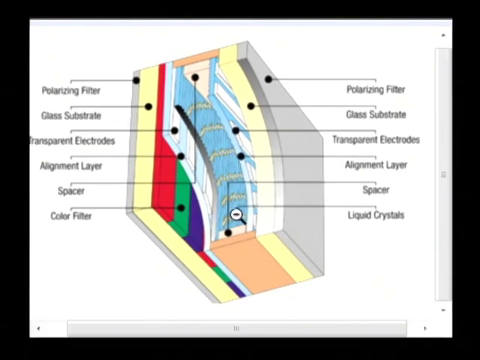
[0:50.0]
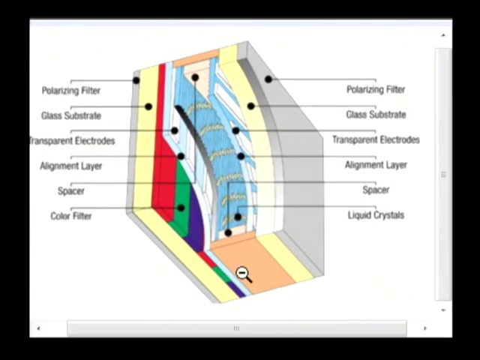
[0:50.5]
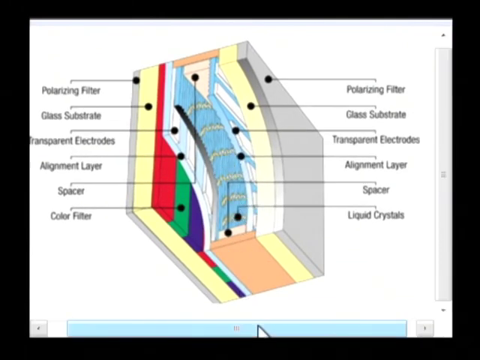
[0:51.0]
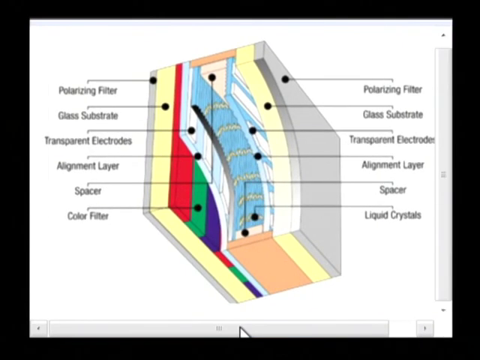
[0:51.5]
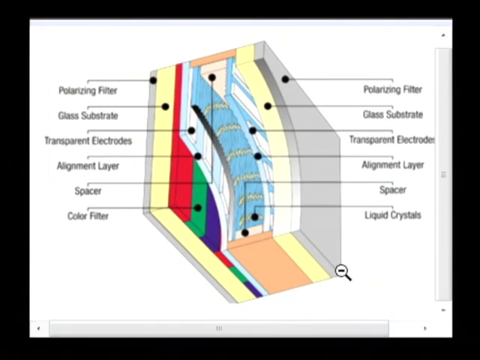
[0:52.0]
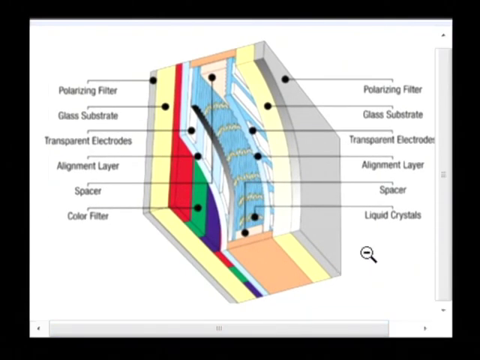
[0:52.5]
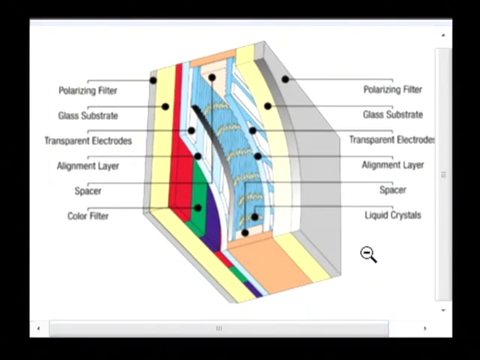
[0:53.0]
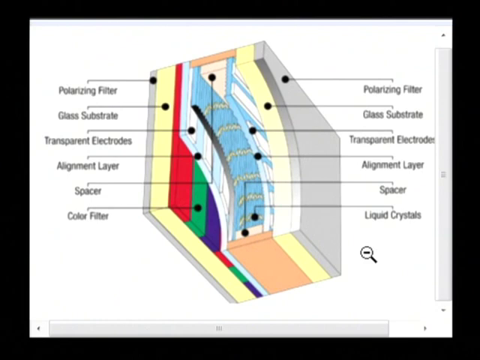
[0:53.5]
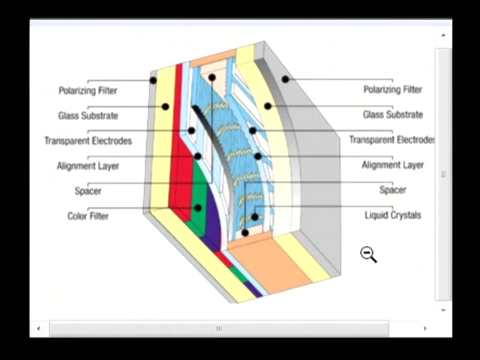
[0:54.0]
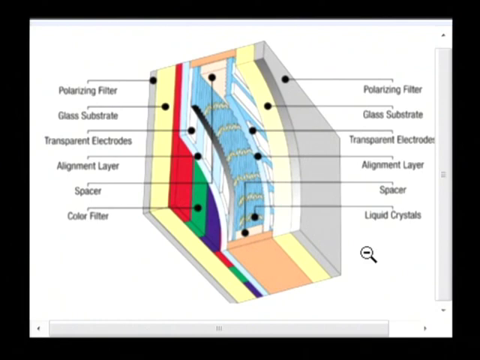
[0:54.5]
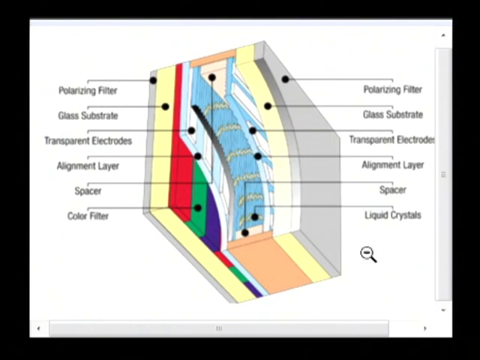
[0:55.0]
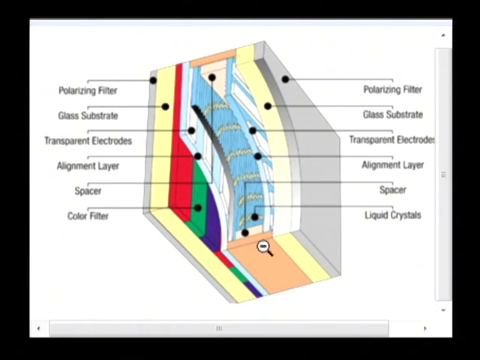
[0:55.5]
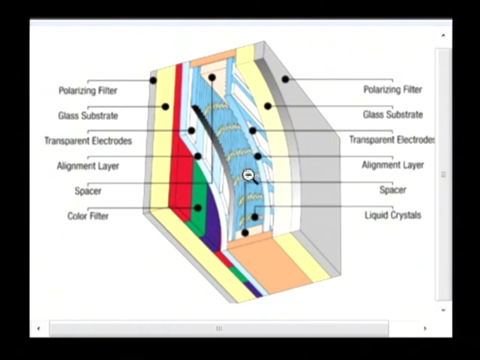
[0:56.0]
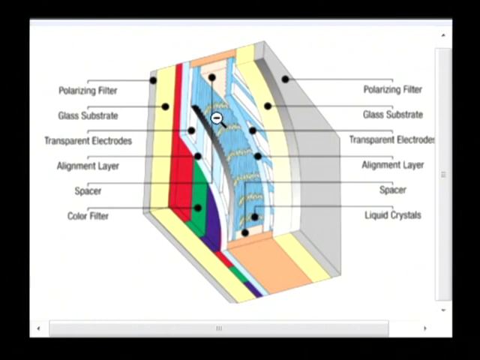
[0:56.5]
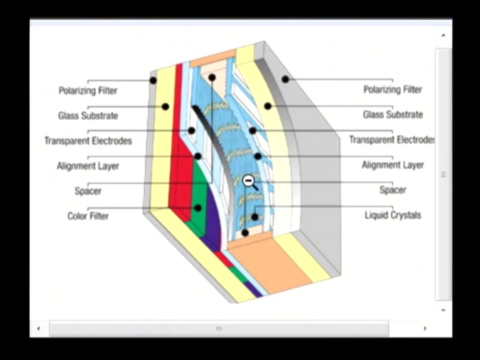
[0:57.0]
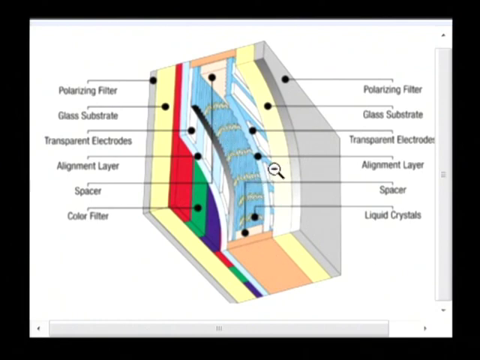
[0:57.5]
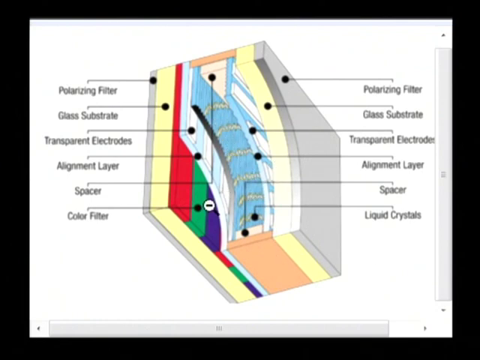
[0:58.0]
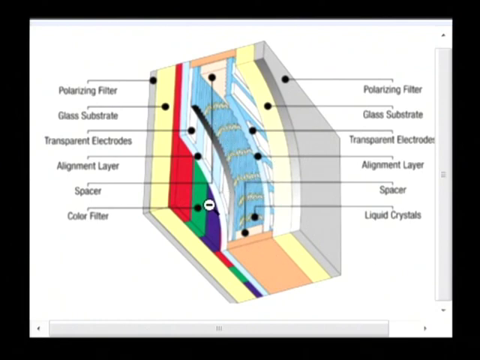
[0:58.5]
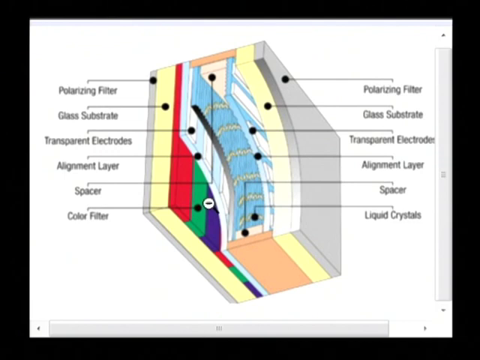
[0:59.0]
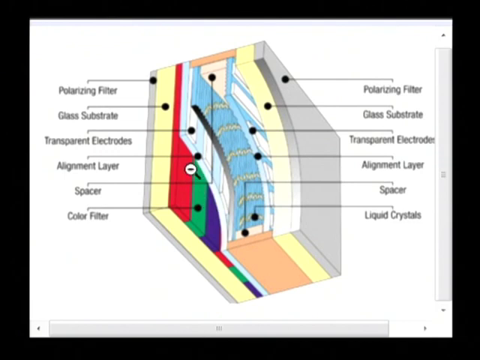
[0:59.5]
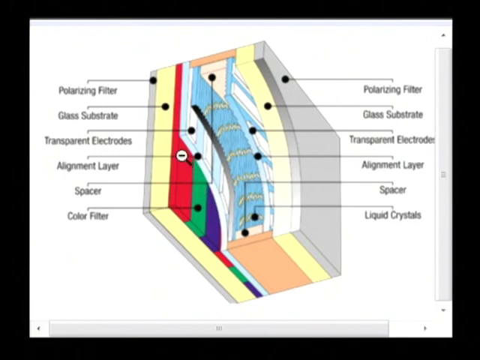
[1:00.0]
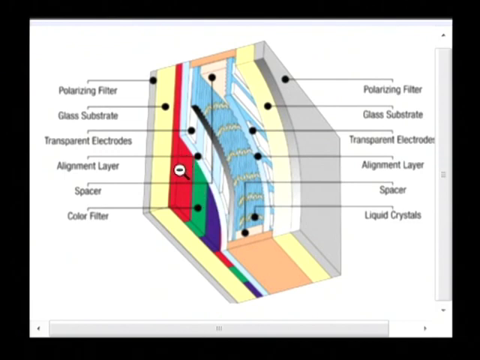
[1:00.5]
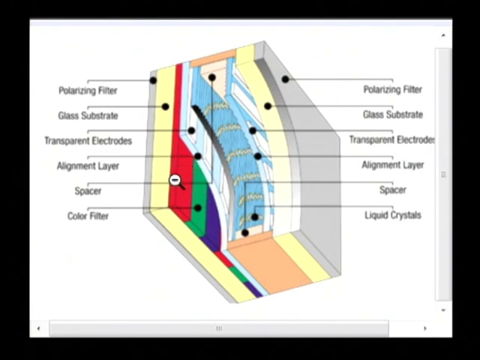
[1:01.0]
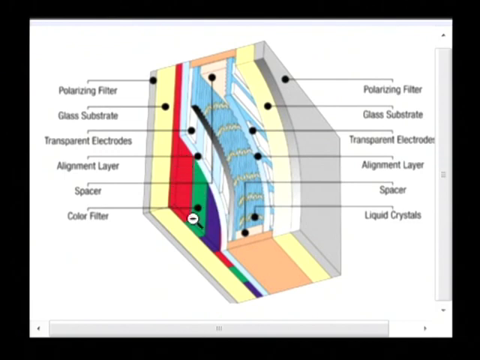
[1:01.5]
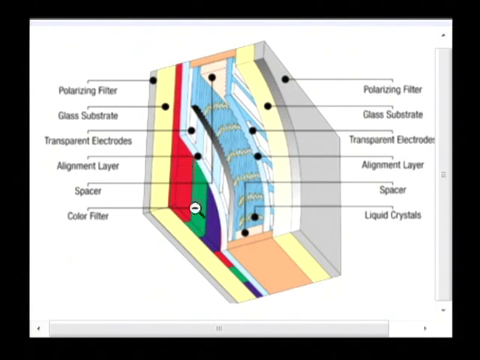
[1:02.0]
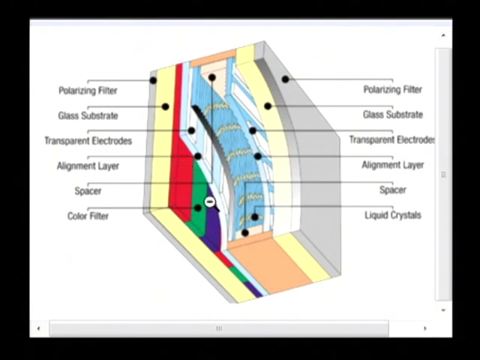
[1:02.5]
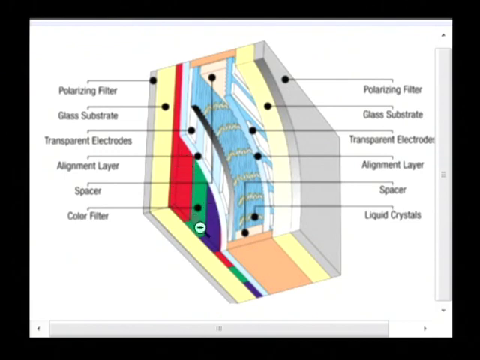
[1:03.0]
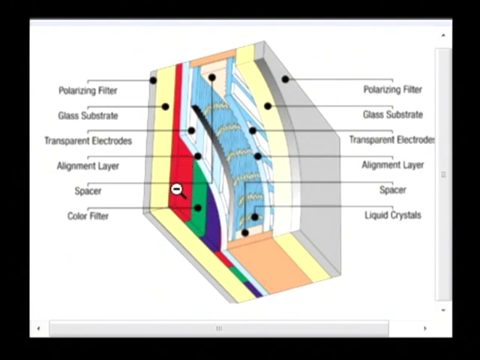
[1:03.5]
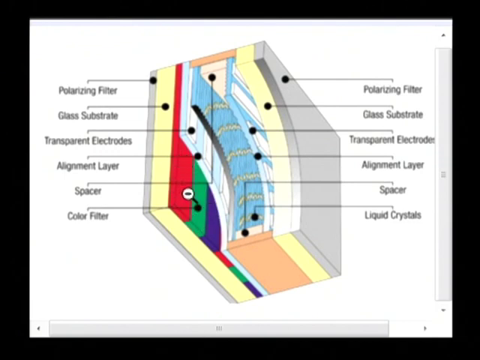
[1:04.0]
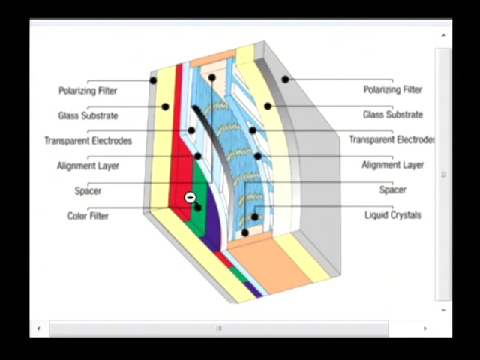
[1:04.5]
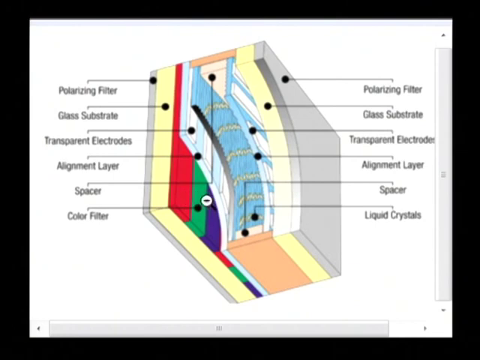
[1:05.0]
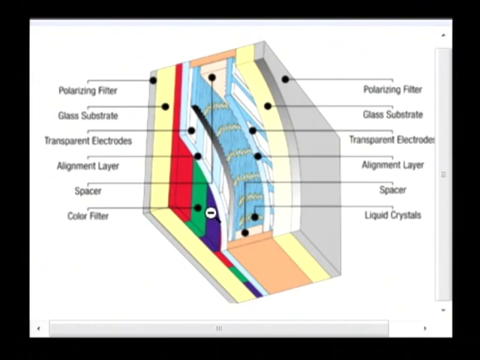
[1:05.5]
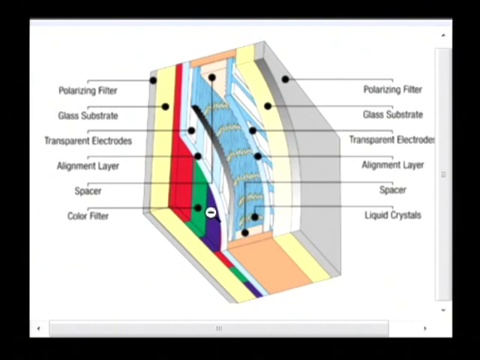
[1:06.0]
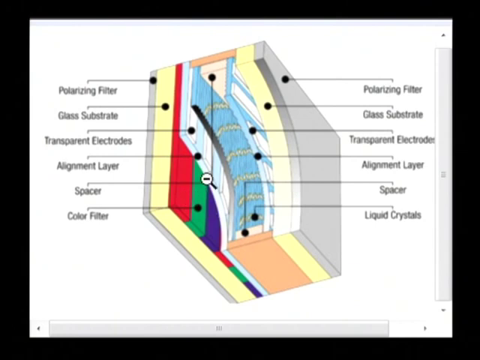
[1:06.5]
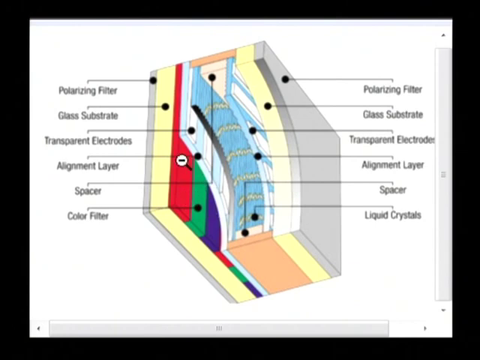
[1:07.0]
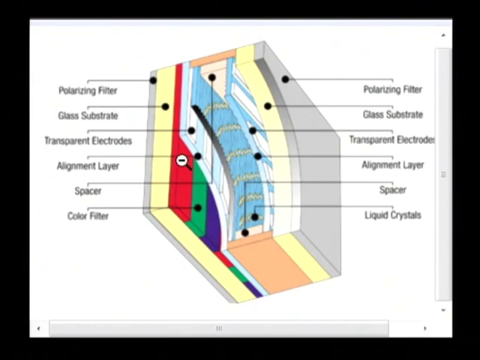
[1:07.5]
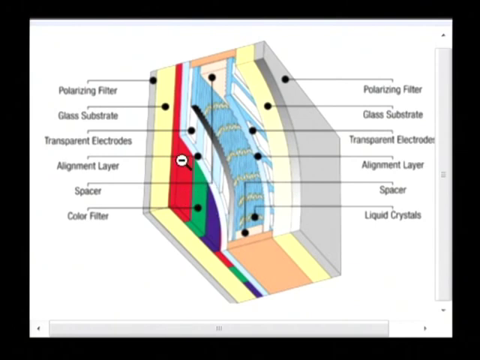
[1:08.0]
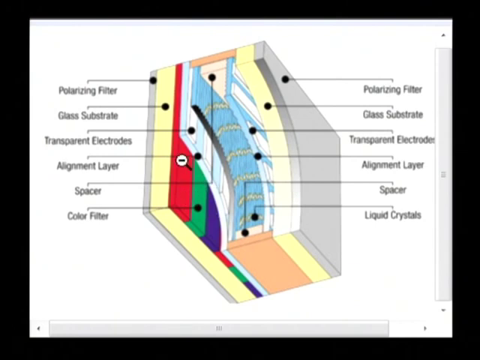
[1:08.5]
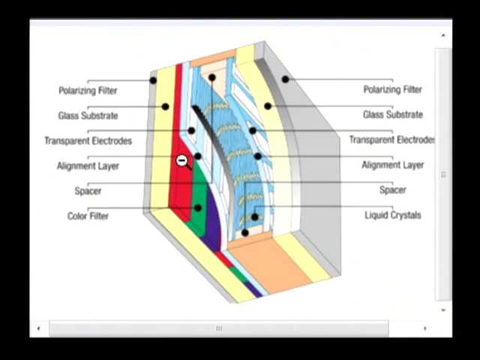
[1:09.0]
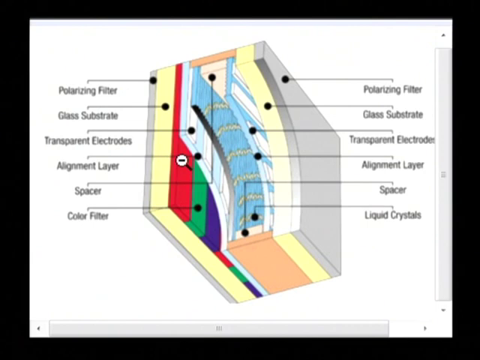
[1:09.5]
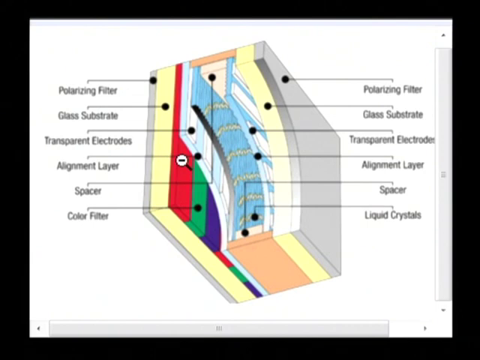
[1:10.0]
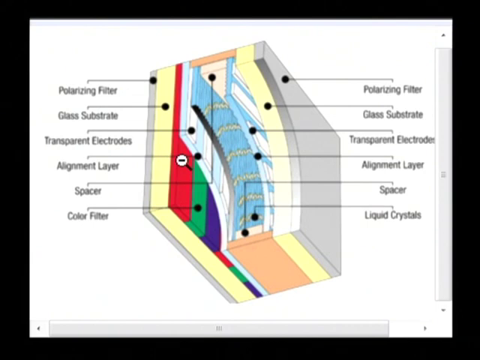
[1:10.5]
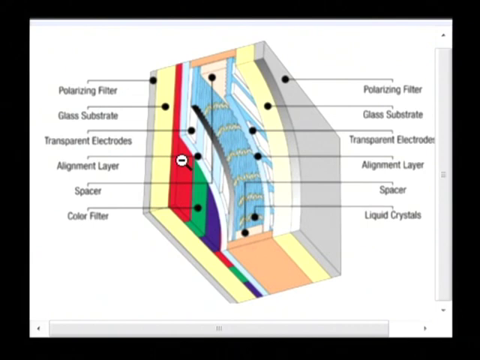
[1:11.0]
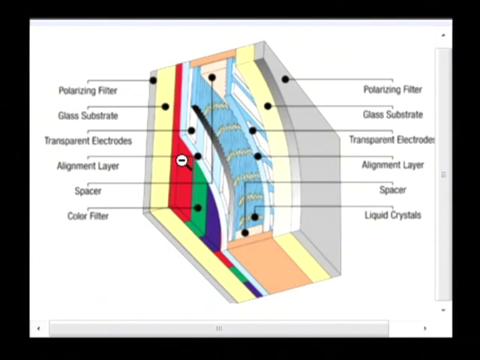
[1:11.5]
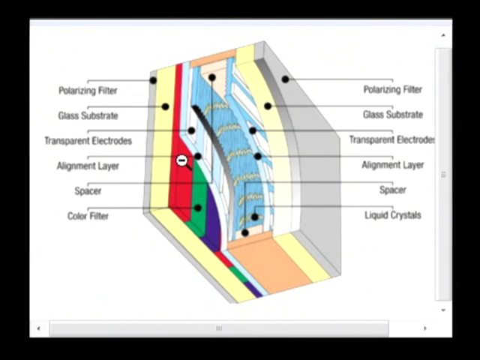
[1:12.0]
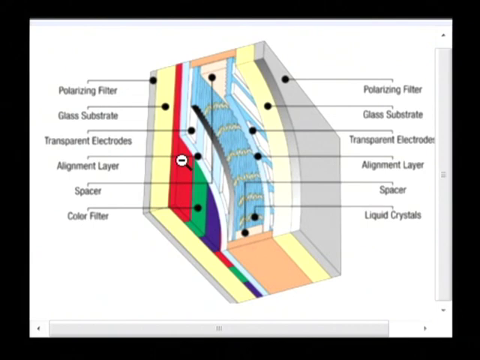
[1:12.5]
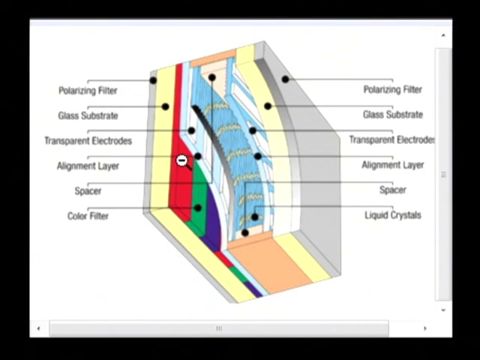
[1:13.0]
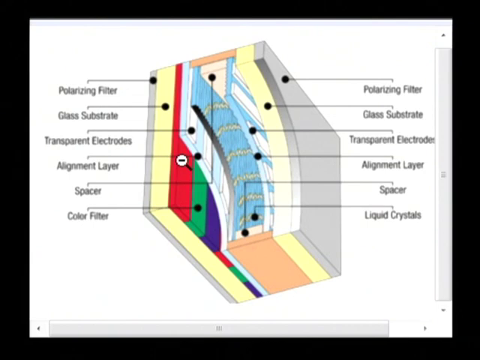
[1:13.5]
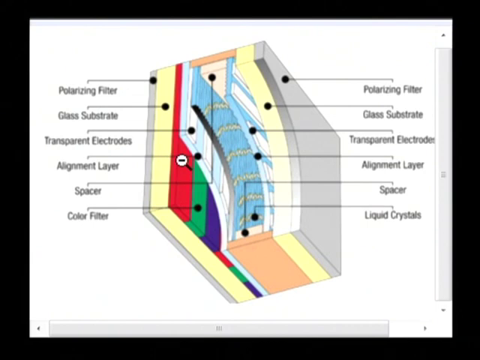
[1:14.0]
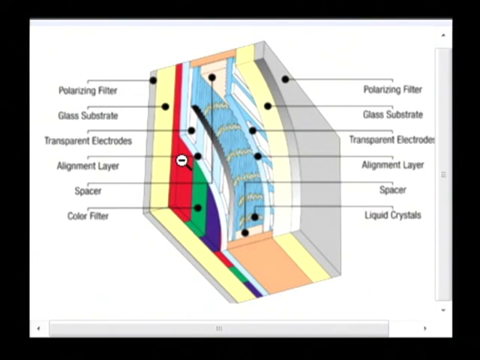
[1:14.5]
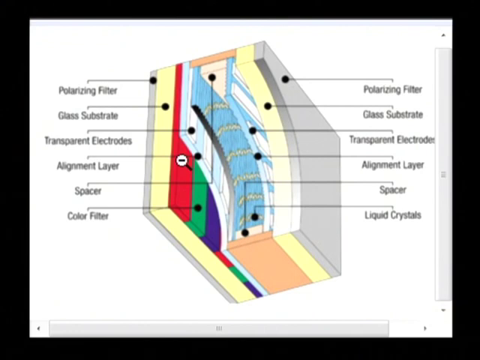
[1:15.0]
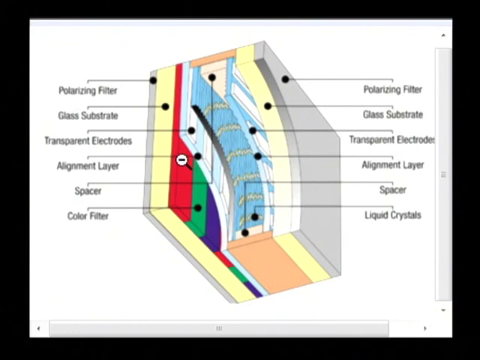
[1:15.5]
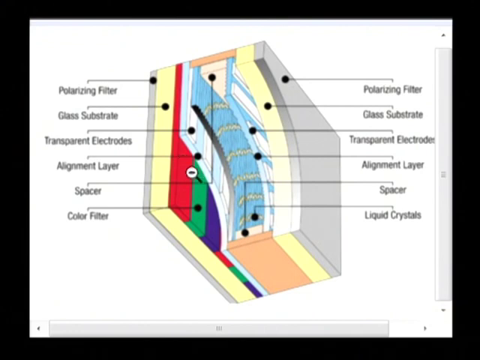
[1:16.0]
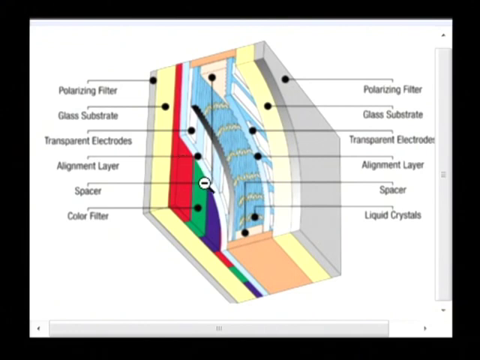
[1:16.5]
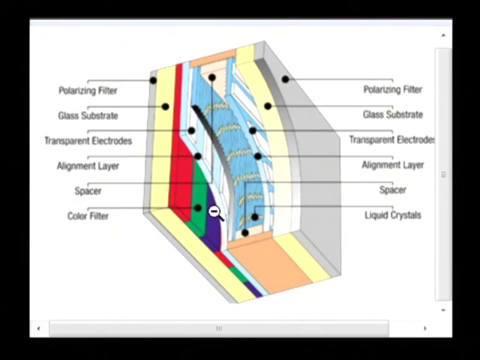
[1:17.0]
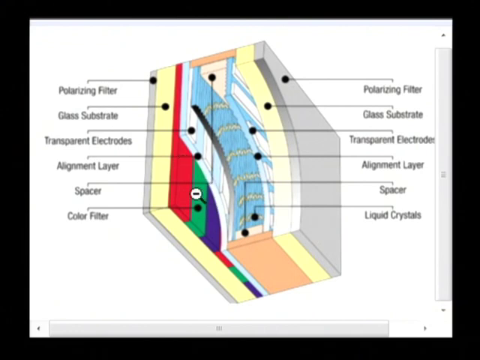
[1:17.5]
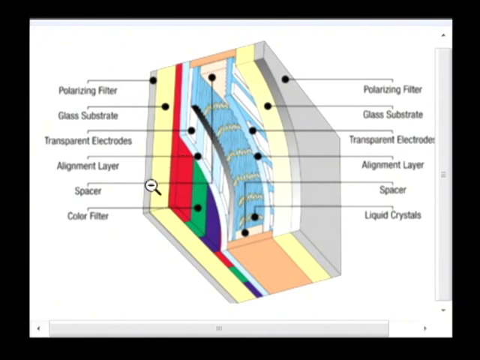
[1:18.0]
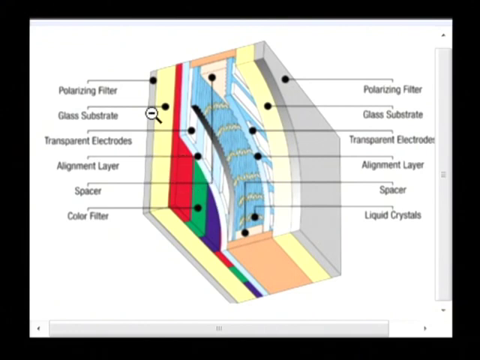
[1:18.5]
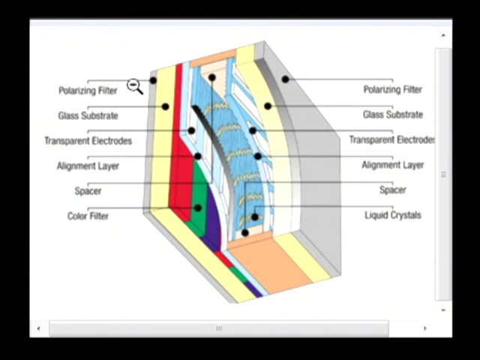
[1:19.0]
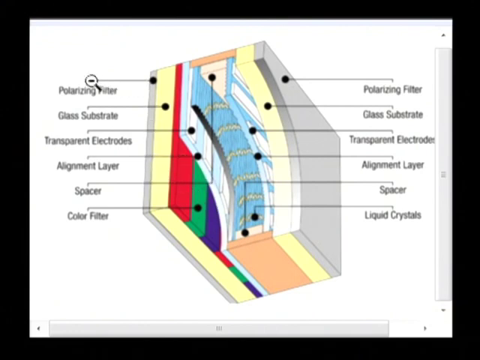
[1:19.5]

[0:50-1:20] The cursor appears to hover over the light blue part of the diagram, kind of going up and down as if highlighting the light blue section. It then moves to the horizontal scroll bar at the bottom of the display; he clicks the bar, which turns blue to show it is selected, drags it toward the left, and moves the cursor back to the image. He again moves the cursor on top of the light blue part as if to highlight it. He then moves to the left, to where there are red, green and blue stripes, and drags the cursor up and down the red stripe, then the green, then the blue, as if highlighting each. He goes back to the red, green and blue stripes once more, then returns to the red stripe and leaves the cursor hovering over one spot on it, before moving down to the green stripe and then the blue stripe. He brings the cursor to a gray flat piece on the very outside on the left of the diagram, then hovers over some of the text on the left side, specifically the label that says "polarizing filter", and the shot cuts off there.